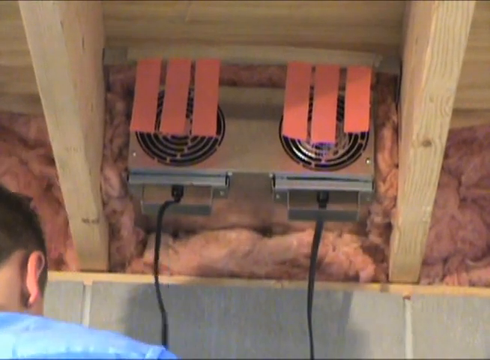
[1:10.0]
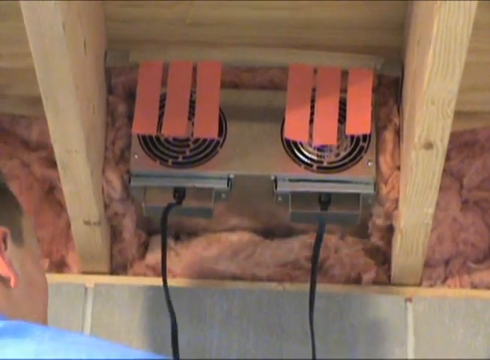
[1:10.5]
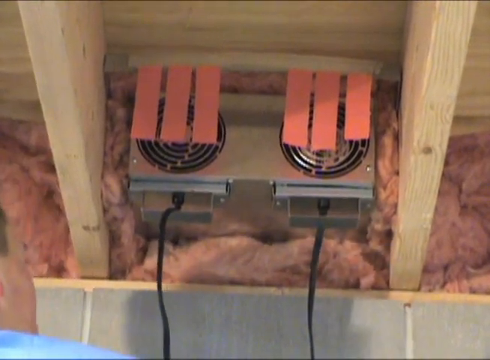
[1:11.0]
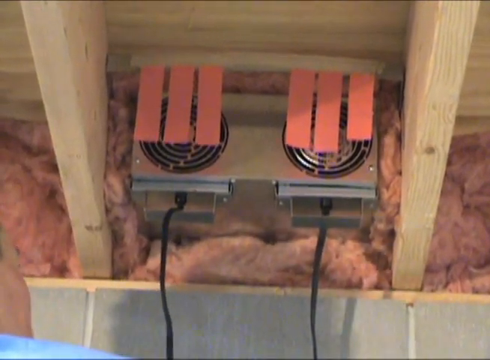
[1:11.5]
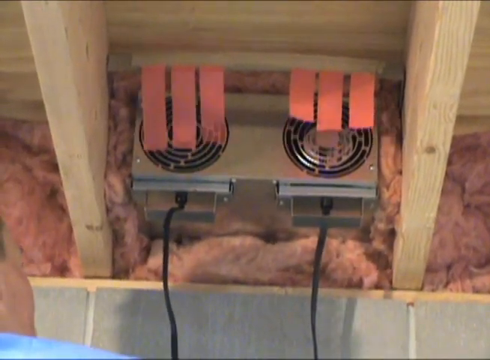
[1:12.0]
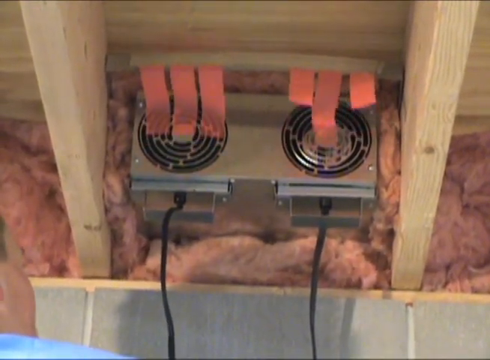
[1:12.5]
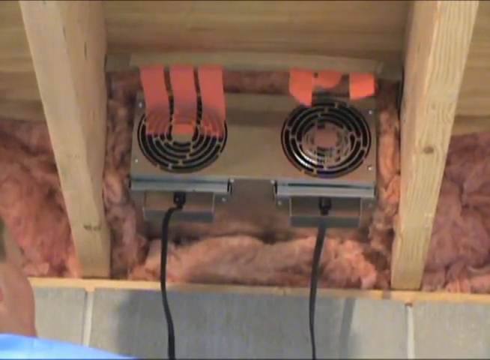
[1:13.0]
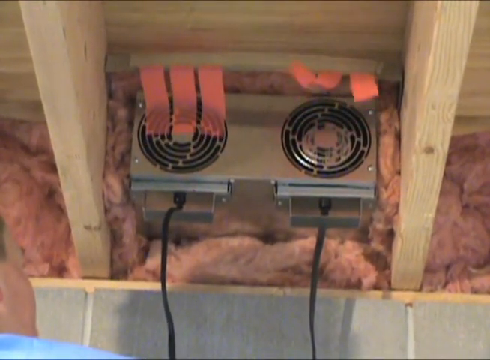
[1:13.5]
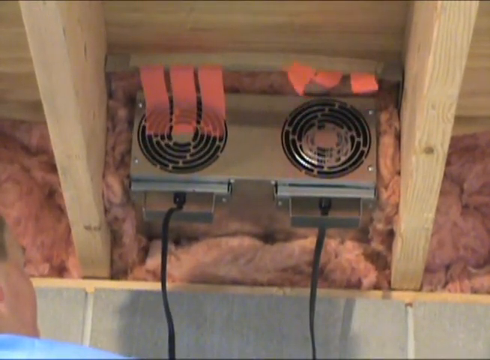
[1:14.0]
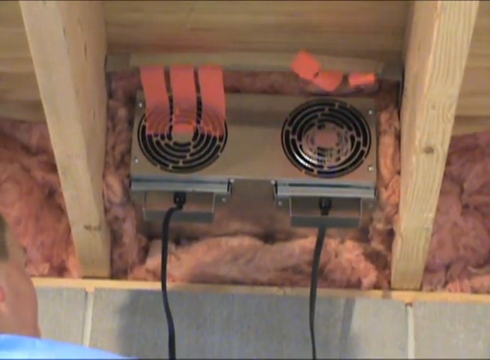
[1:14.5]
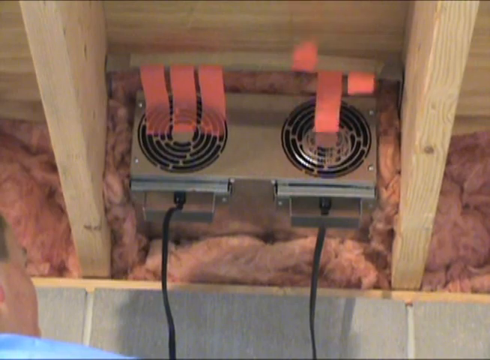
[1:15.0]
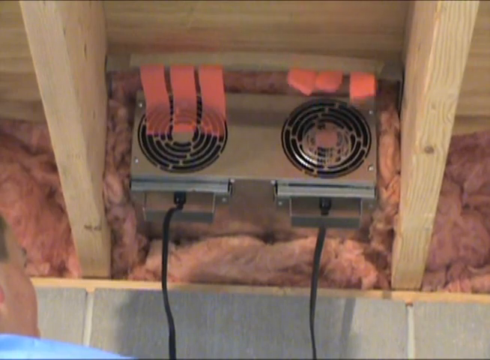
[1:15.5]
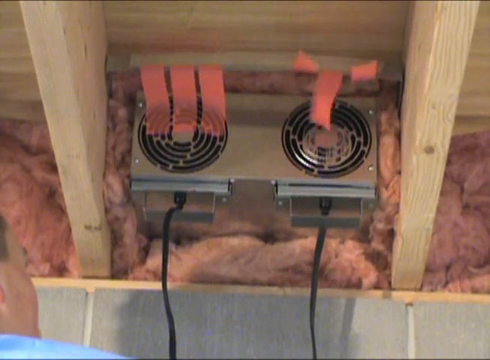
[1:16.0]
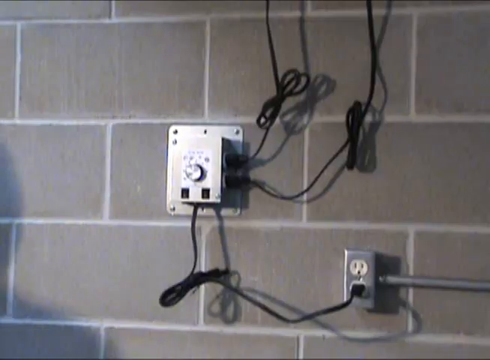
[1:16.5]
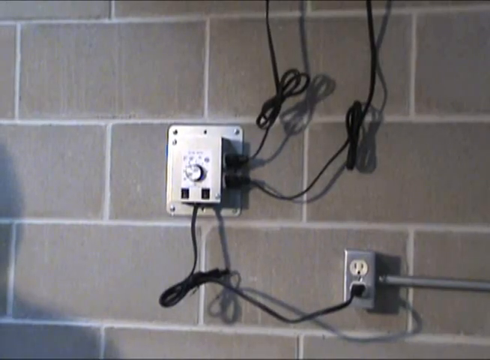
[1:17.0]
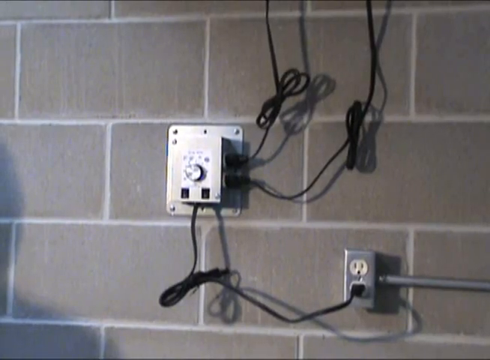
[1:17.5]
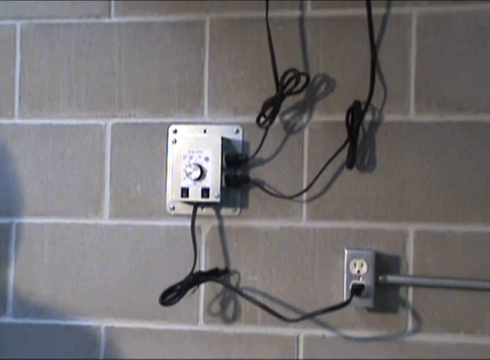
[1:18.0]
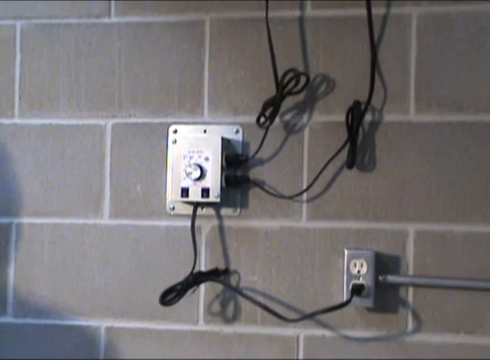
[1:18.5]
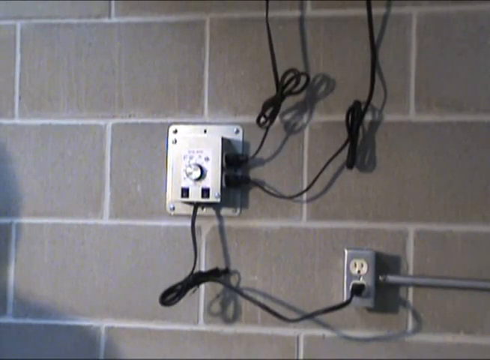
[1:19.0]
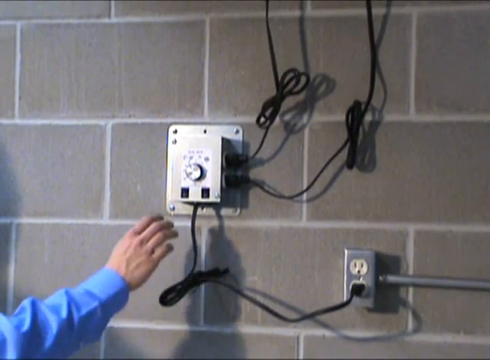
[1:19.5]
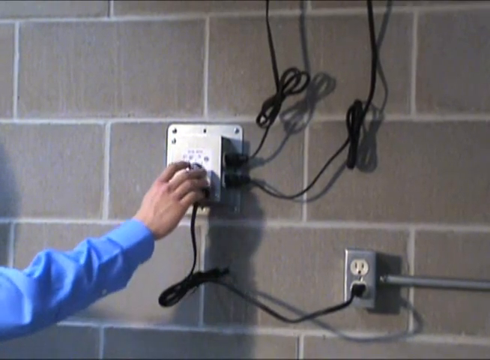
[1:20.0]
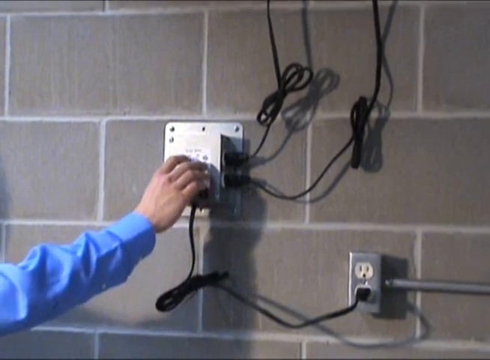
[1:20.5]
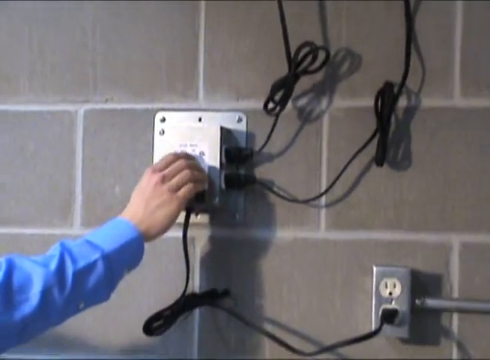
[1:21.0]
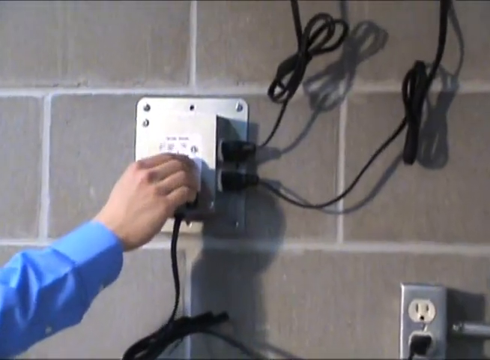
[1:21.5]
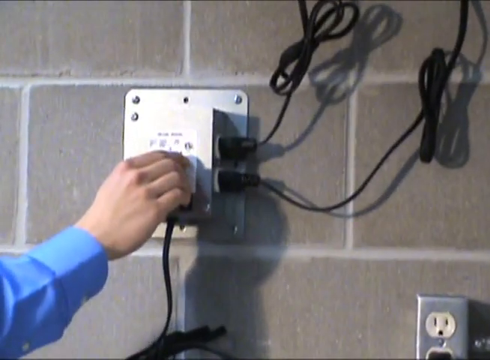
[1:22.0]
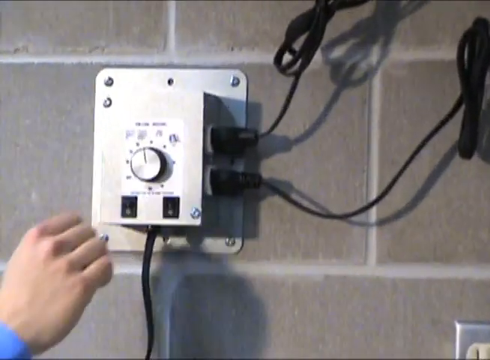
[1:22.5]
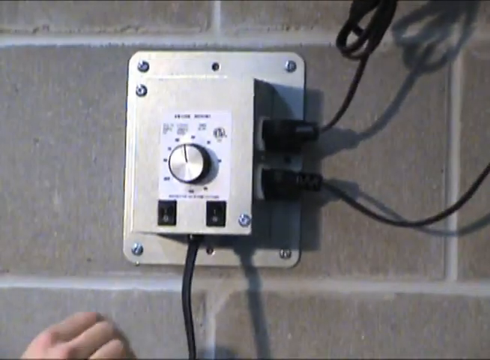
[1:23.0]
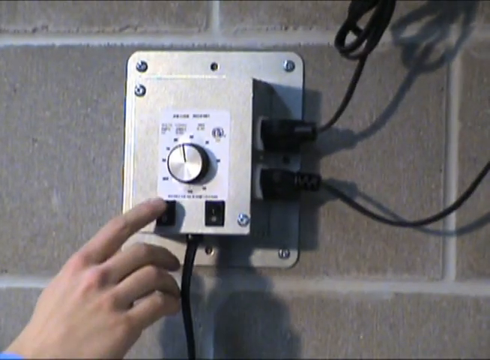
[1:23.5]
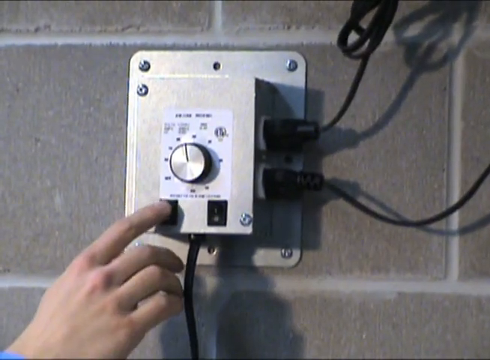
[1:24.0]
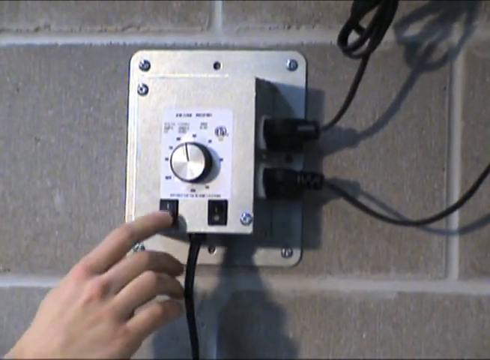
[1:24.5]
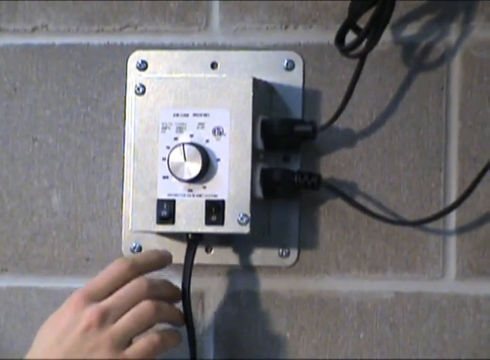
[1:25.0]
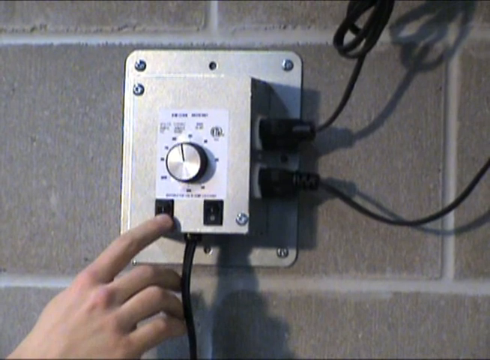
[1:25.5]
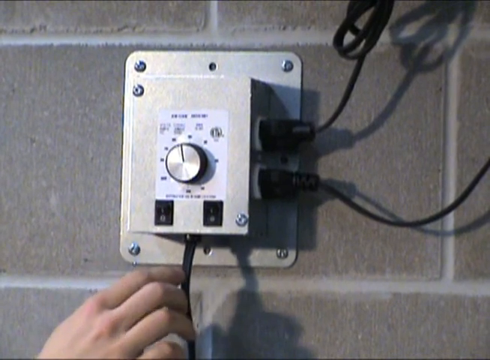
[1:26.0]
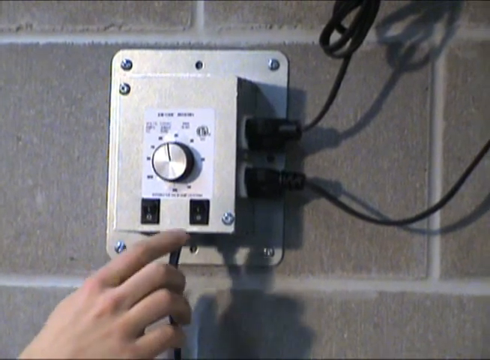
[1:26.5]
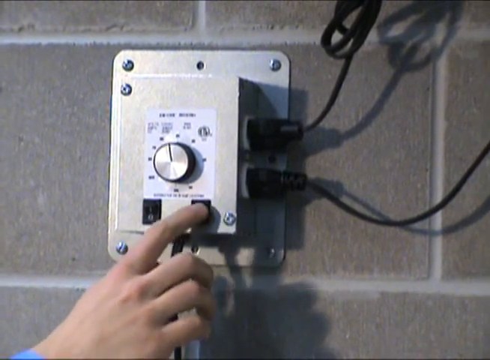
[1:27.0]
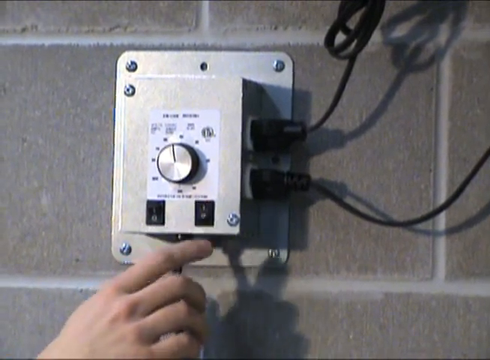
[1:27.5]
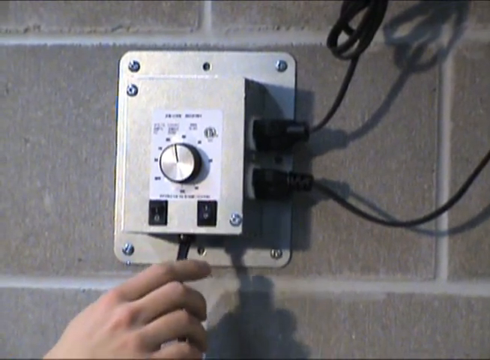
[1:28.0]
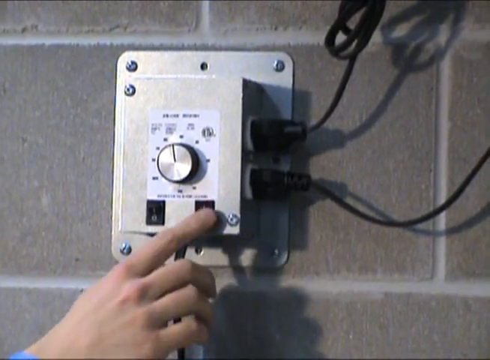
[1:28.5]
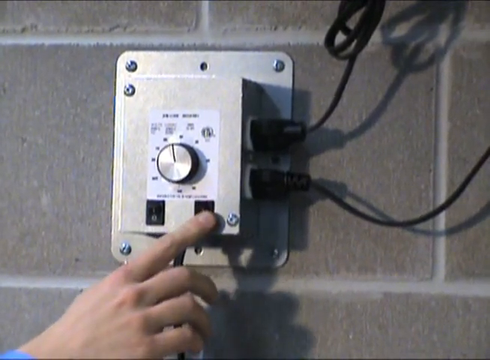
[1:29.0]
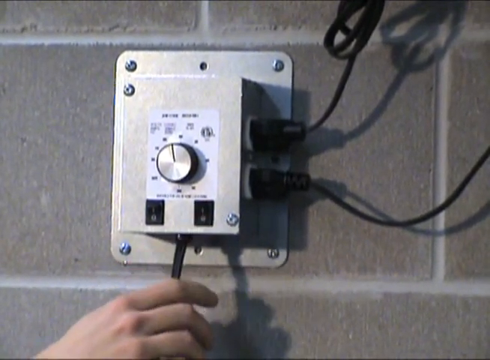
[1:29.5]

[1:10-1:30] The top of a breeze block wall is shown with pink fibreglass insulation, pinewood rafters and a metal fan unit with twin circular grilles. Two black cables lead downwards from the bottom of the unit, and six pink pieces of tape are attached just in front of the fan unit, three on the left and three on the right. A middle-aged white man's head is visible at the bottom left of the frame. He demonstrates that the right-hand fan has been turned on, and the pieces of tape flutter in the breeze from the fan. The picture changes to the breeze block wall, where a metal plate is screwed into the wall with the fans' control unit attached to it. The control unit has a rotary dial, and the two black cables from the bottom of the fan unit plug into its right-hand side. A further black cable comes from the bottom of the control unit, heads down and then right, and attaches to an electrical plug that plugs into a power socket. The power socket is metal, with two sockets for two plugs and a cable conduit leading off horizontally to the right. The man's right hand adjusts the rheostat of the control unit and shows two black switches below the rheostat that can be turned on or off, presumably for the left-hand and right-hand fans. The view returns to the fan, where the right-hand fan is on and a breeze flutters the tape. Back at the control unit, the man turns the left and right switches on and off.